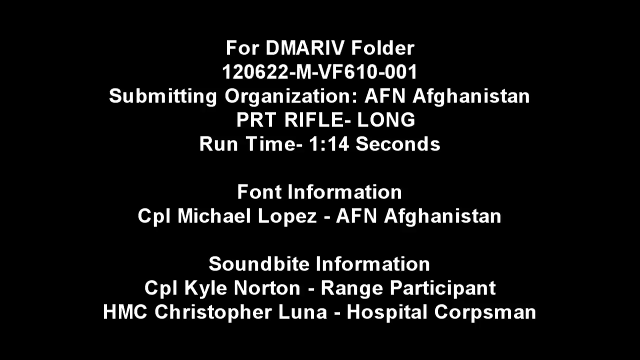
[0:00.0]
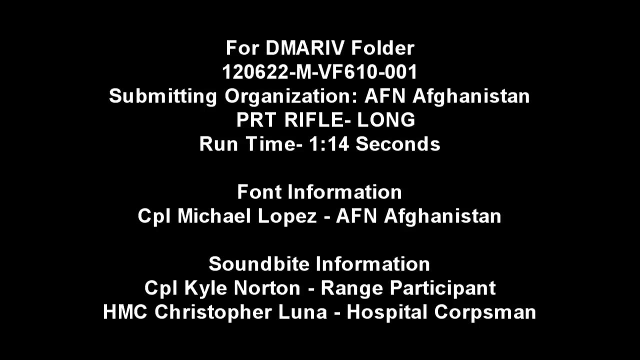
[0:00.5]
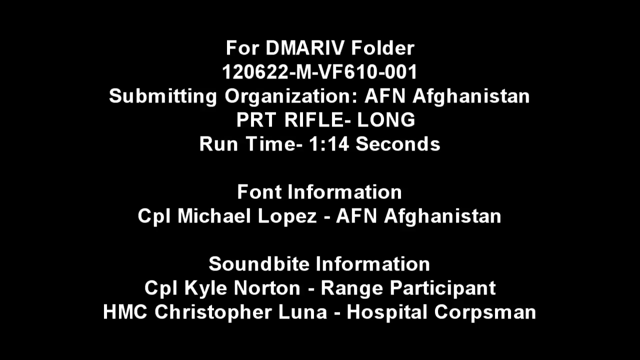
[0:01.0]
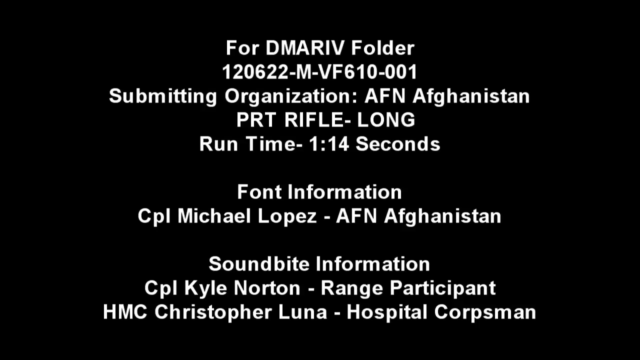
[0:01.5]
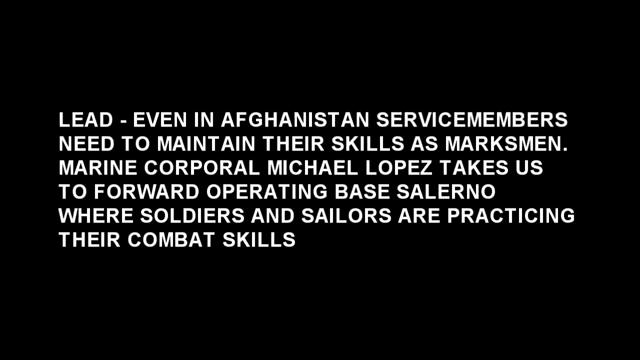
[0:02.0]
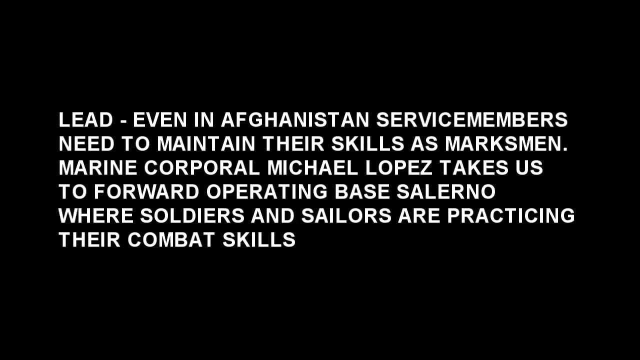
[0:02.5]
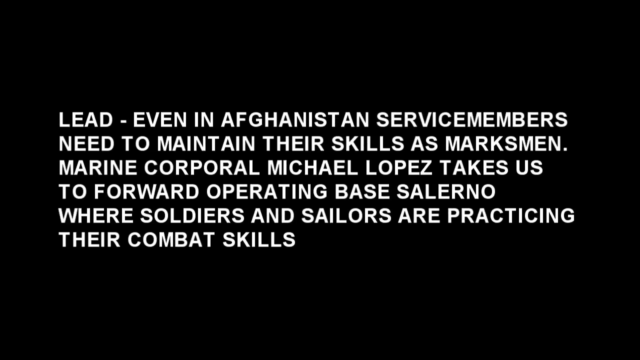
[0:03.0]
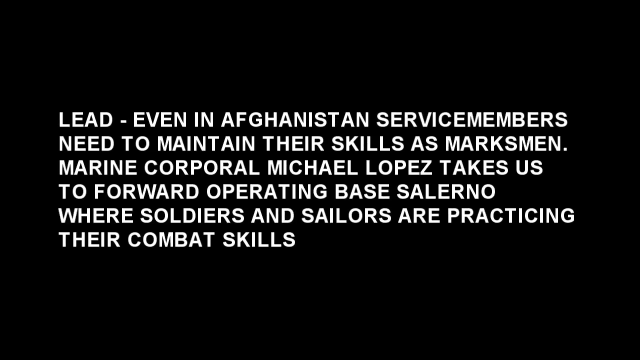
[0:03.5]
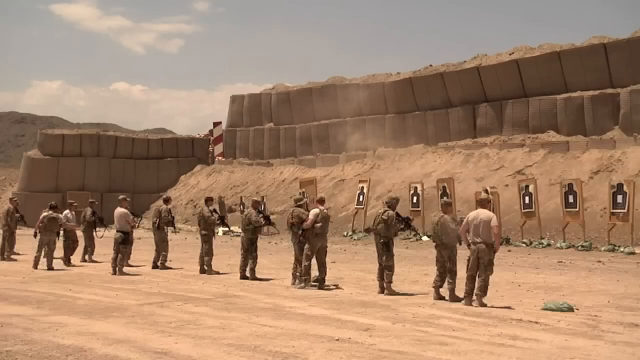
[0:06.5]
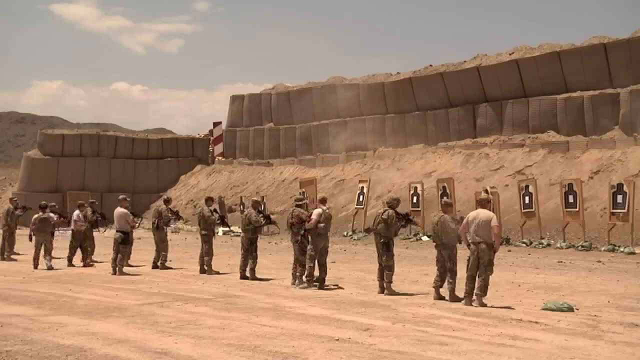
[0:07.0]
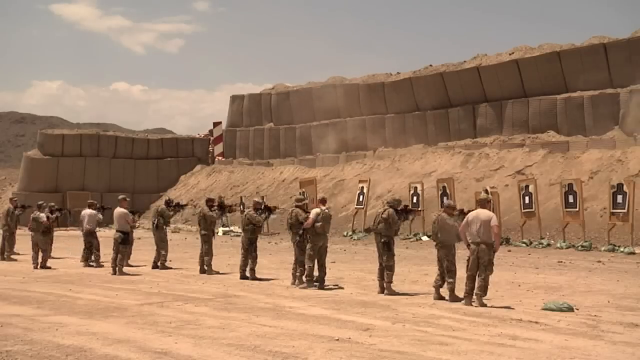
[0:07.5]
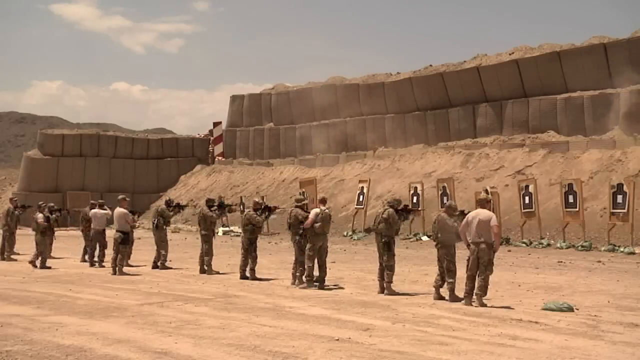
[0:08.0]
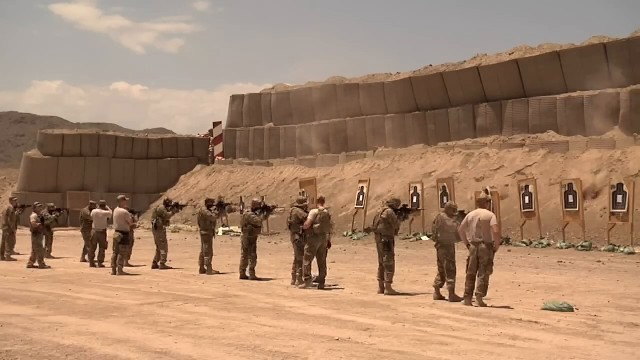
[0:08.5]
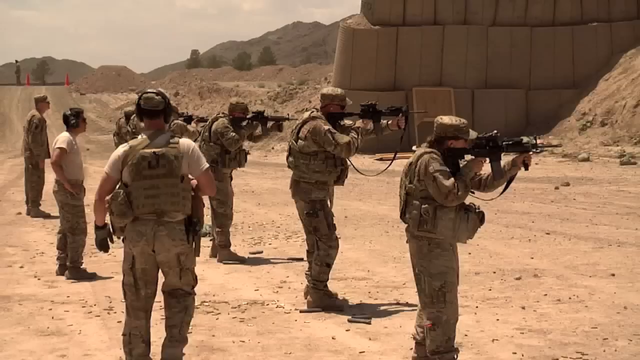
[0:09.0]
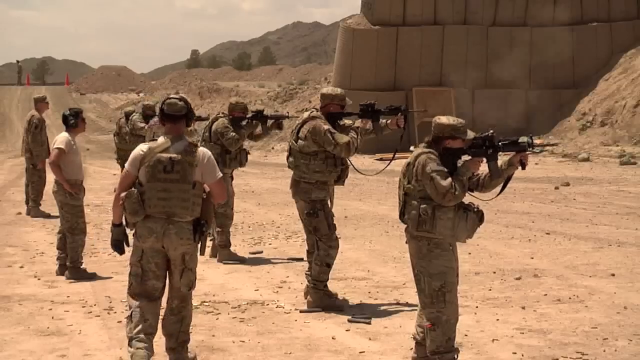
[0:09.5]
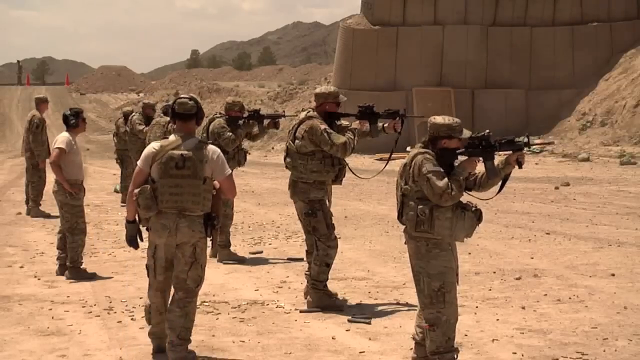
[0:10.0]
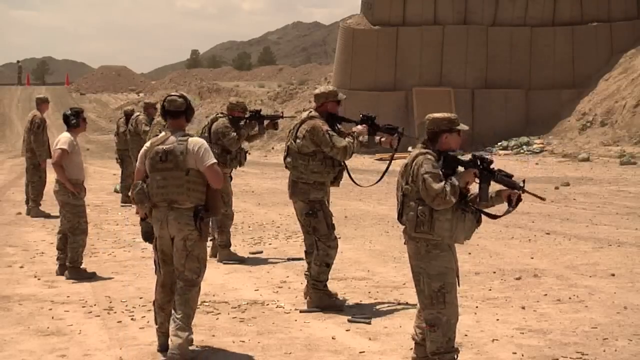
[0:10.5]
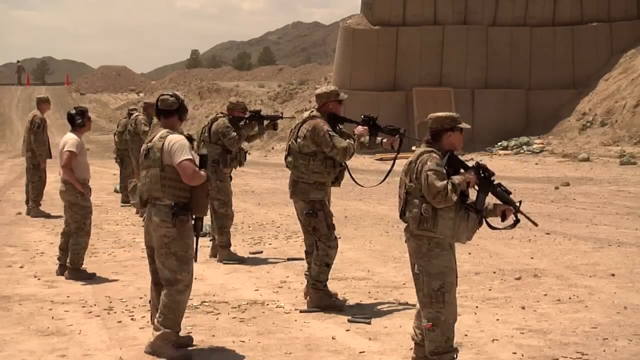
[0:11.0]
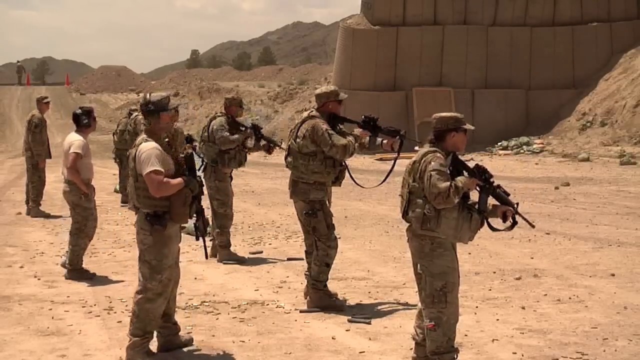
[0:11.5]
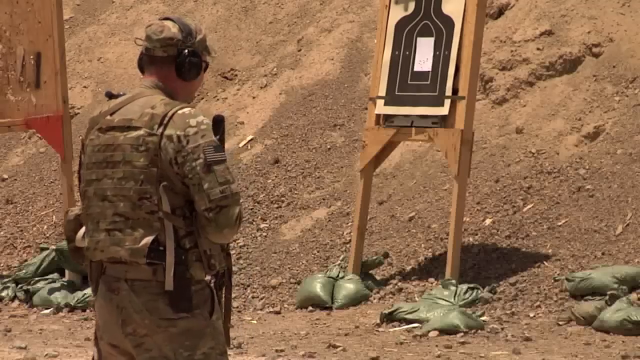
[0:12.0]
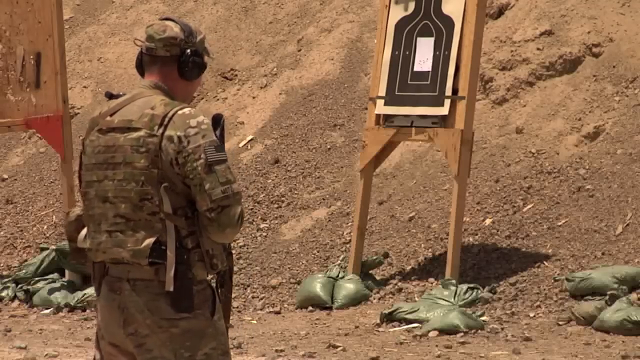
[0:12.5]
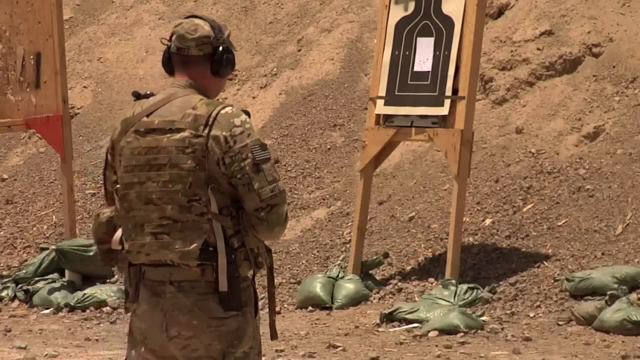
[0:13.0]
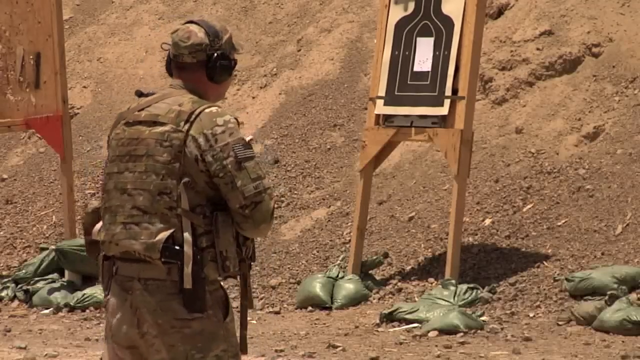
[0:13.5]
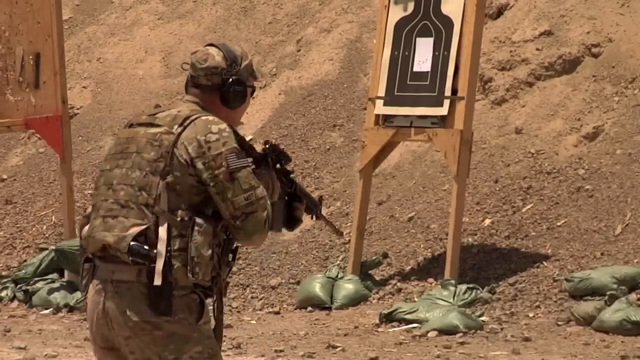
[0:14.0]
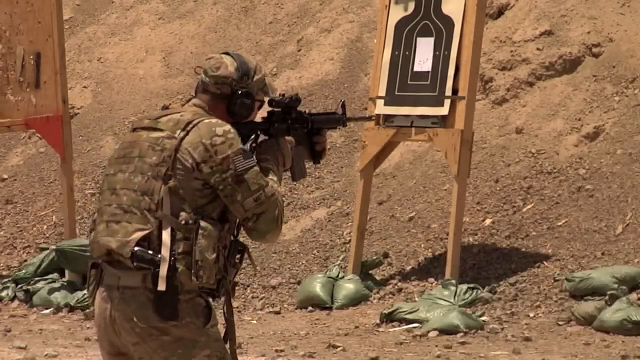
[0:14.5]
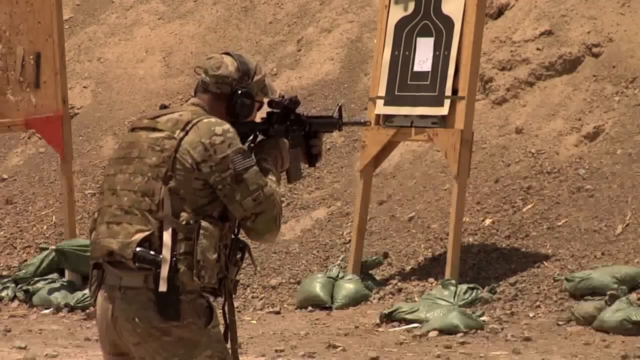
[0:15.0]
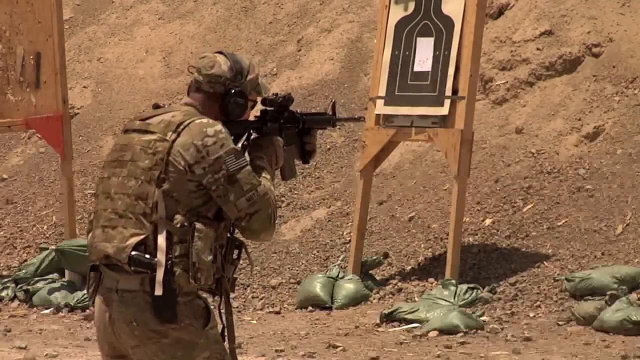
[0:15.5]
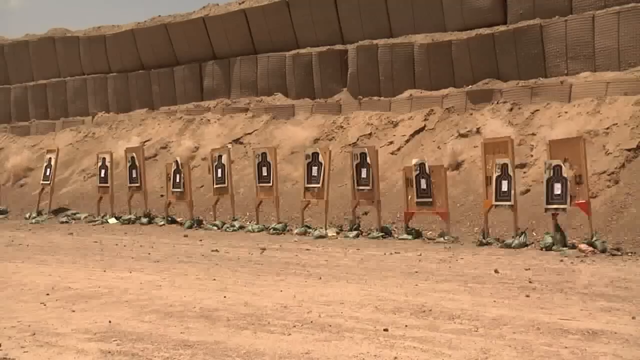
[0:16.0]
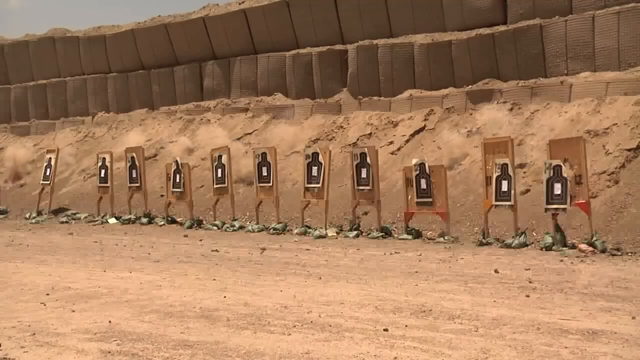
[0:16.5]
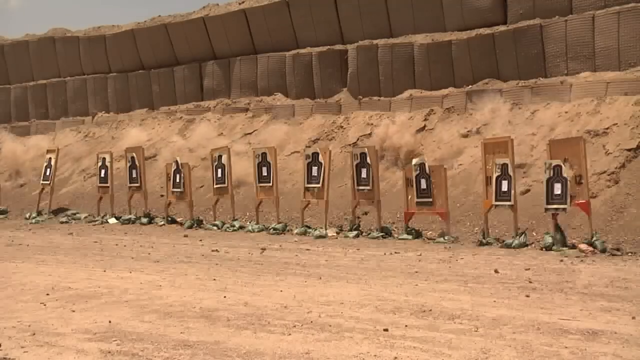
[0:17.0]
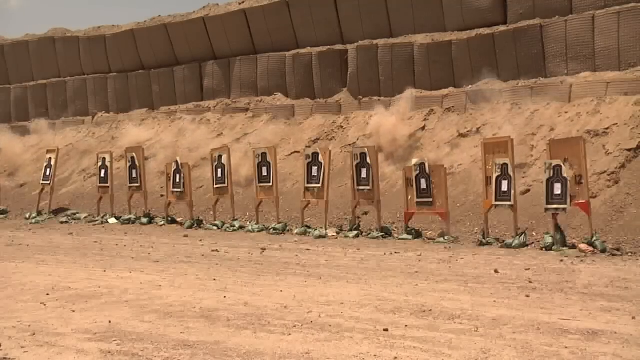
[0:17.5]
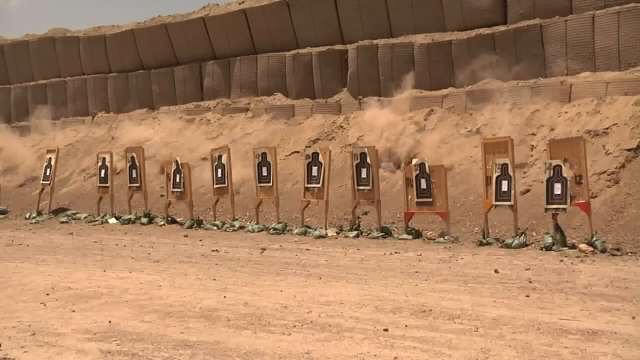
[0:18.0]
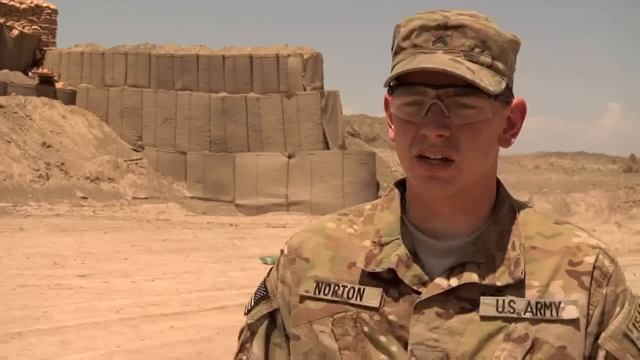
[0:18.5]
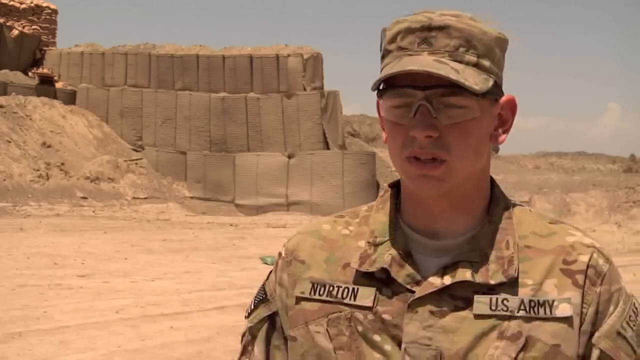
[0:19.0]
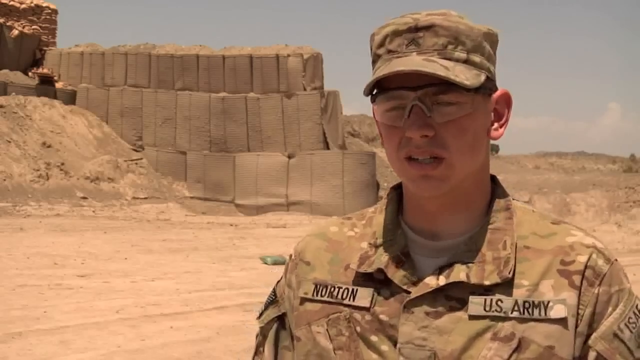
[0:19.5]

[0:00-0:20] Text in large white writing appears on a black screen. Several soldiers, members of the American military, are having a session of target practice in what looks like a desert, with lots of sand dunes; it is very dry and isolated. They wear full military camouflage clothing with hats and protective eyewear, and they fire at targets that are lined up. The text refers to the word "rifles" and mentions the country Afghanistan; the soldiers appear to be in Afghanistan, practicing their shooting skills and other military exercises. Lots of green sandbags are placed on the ground around the targets, apparently to keep them upright and in place so they don't fall over from the force of the bullets.